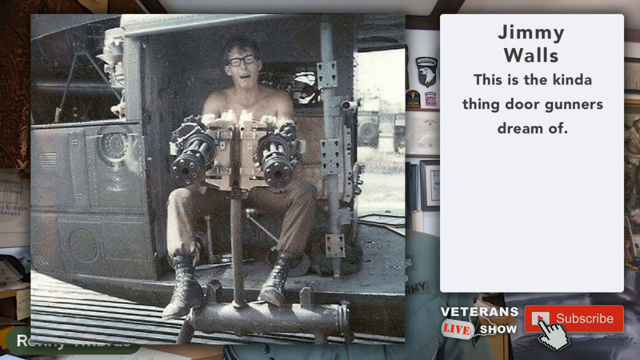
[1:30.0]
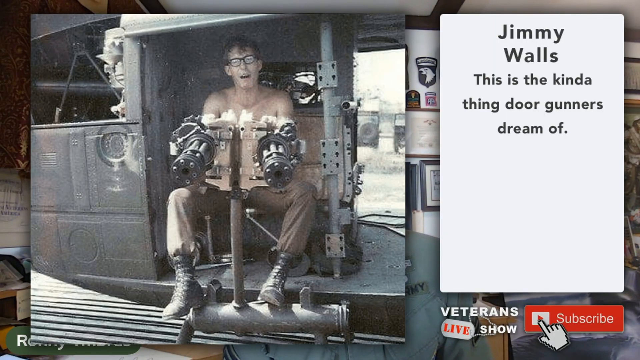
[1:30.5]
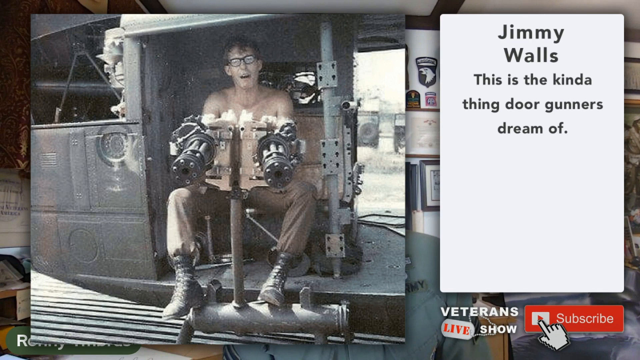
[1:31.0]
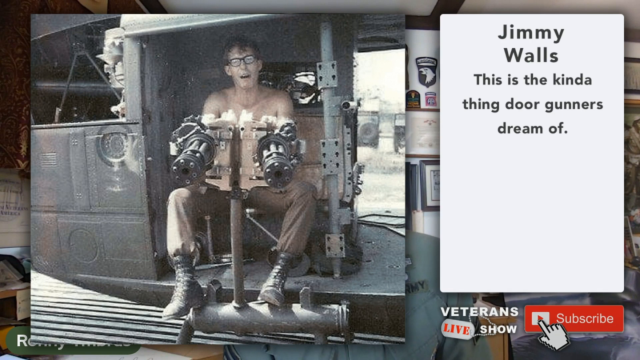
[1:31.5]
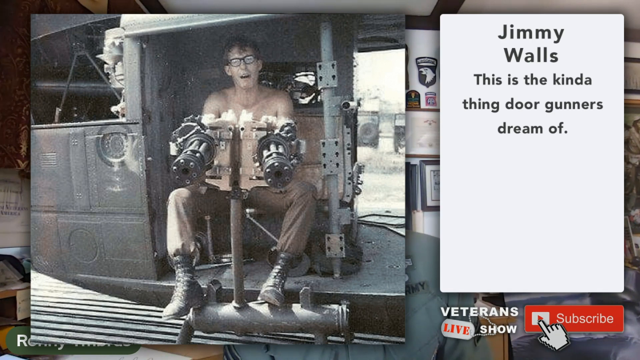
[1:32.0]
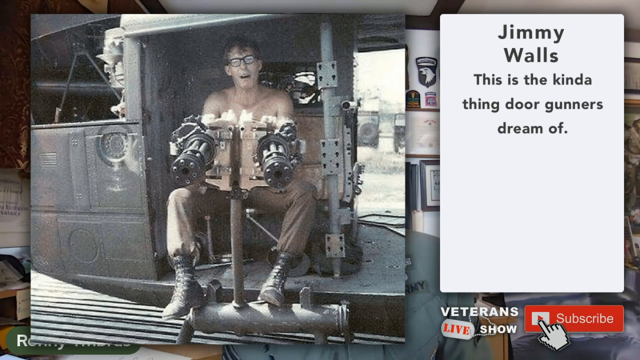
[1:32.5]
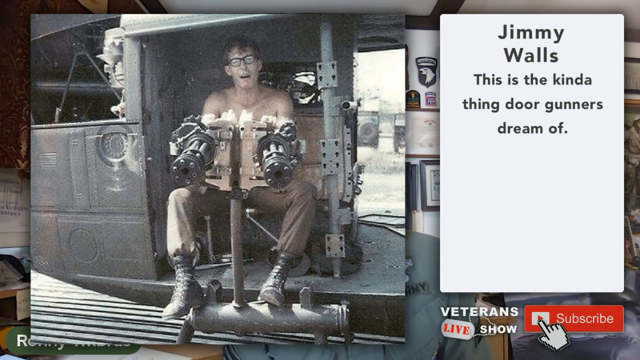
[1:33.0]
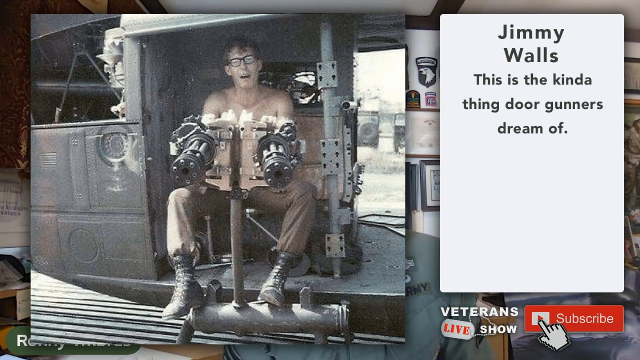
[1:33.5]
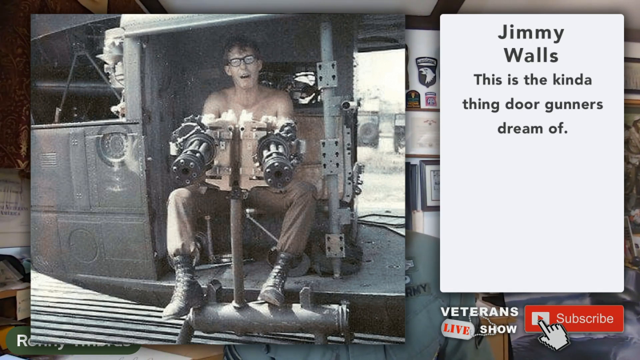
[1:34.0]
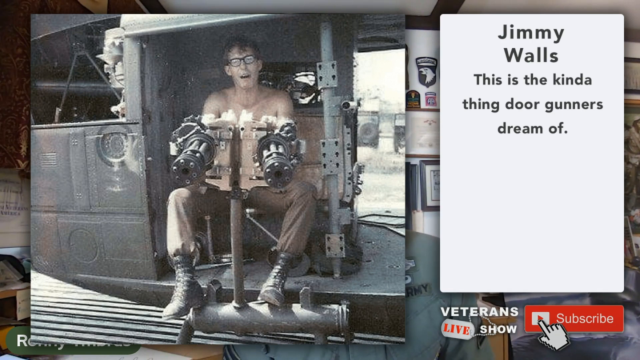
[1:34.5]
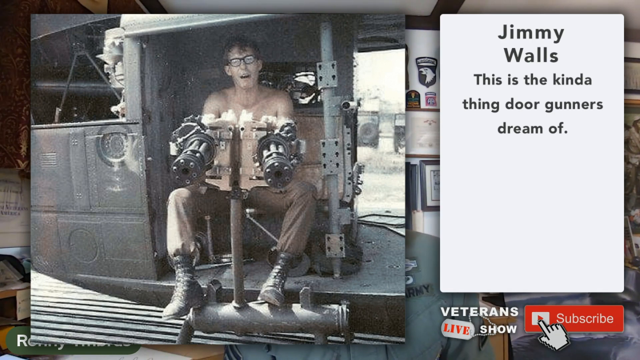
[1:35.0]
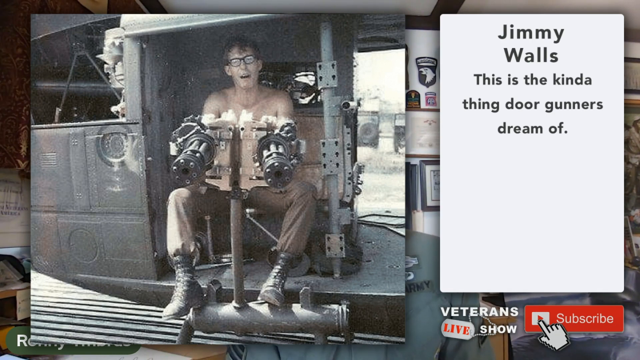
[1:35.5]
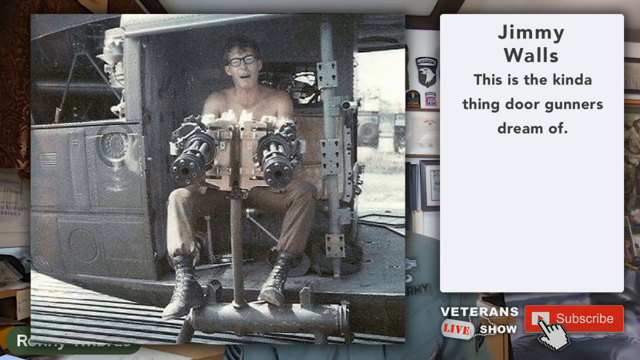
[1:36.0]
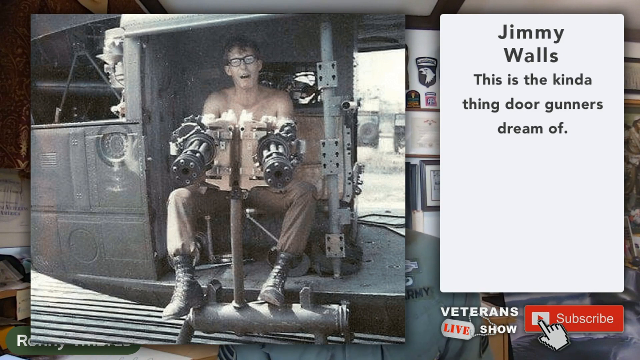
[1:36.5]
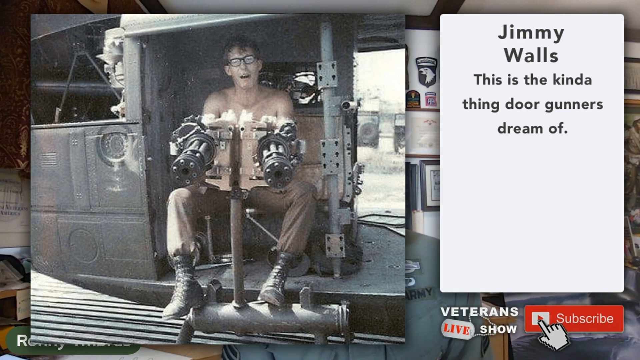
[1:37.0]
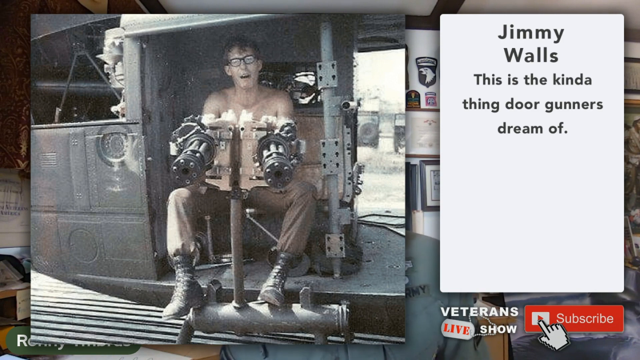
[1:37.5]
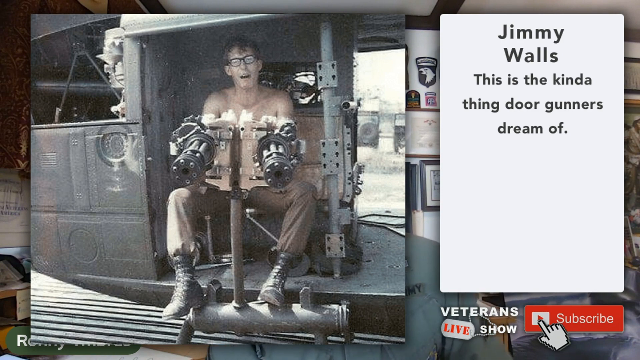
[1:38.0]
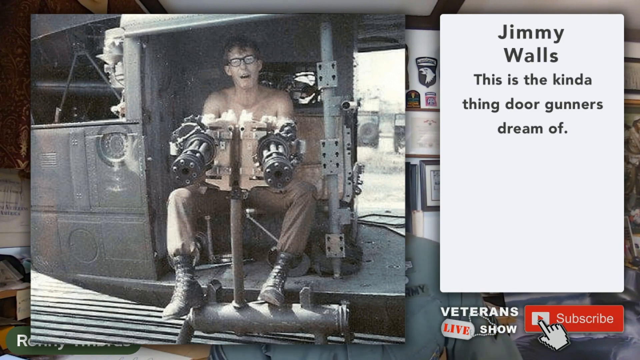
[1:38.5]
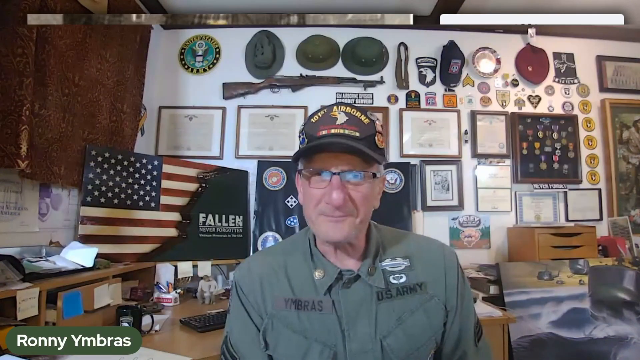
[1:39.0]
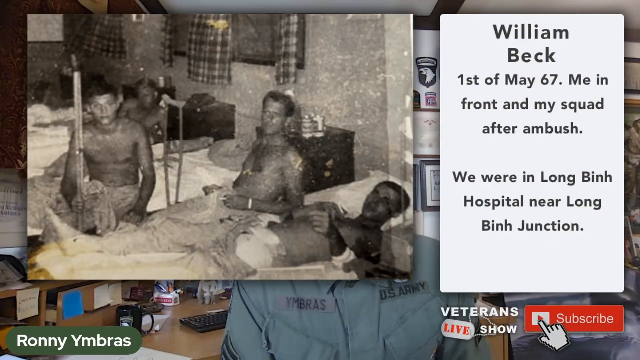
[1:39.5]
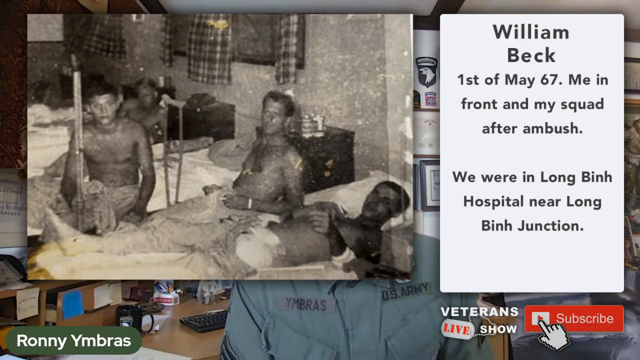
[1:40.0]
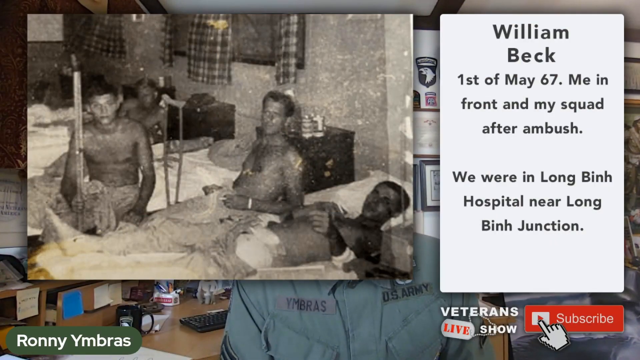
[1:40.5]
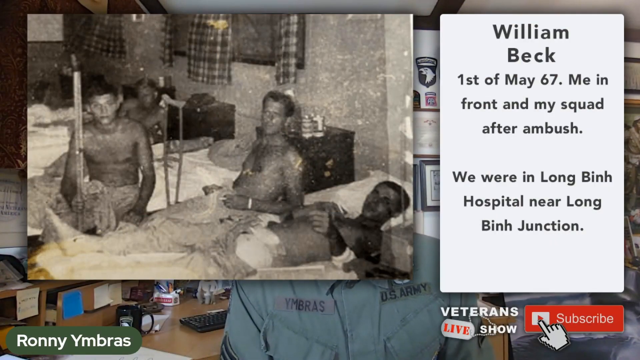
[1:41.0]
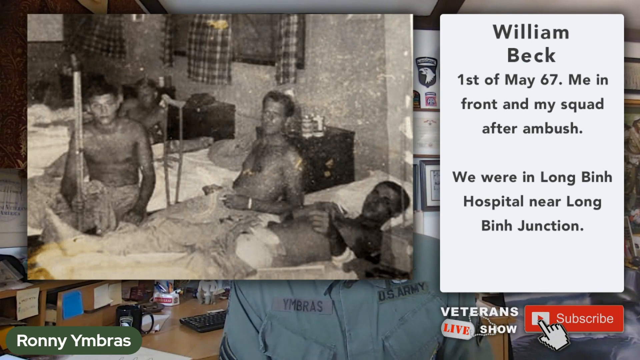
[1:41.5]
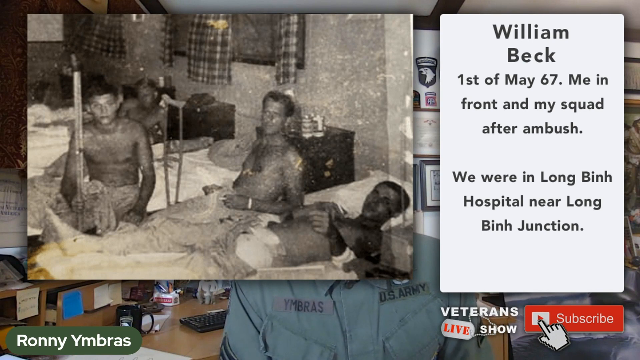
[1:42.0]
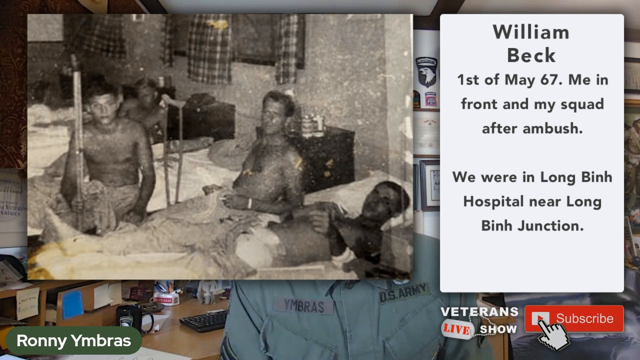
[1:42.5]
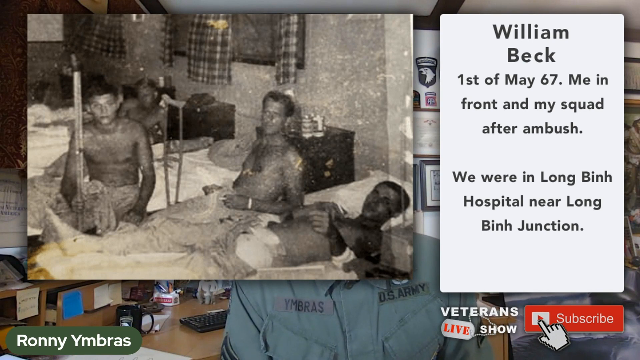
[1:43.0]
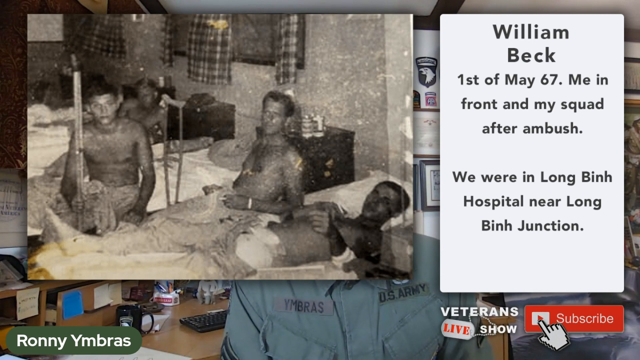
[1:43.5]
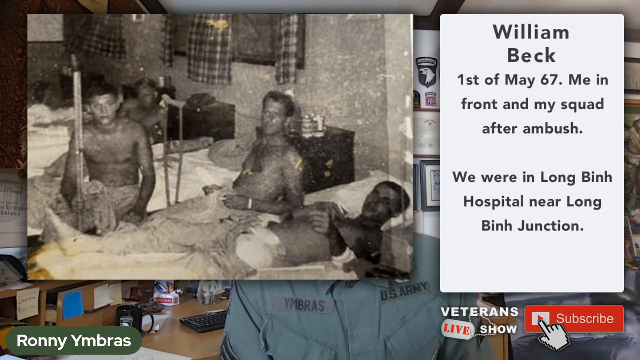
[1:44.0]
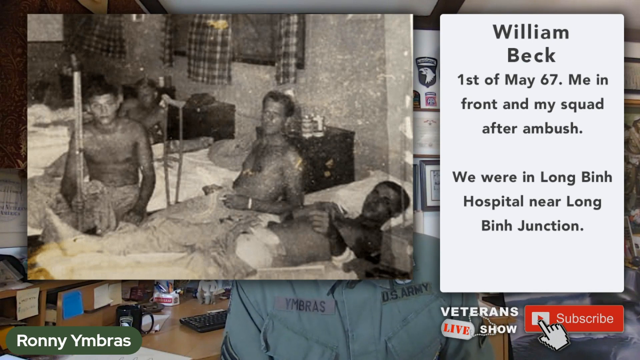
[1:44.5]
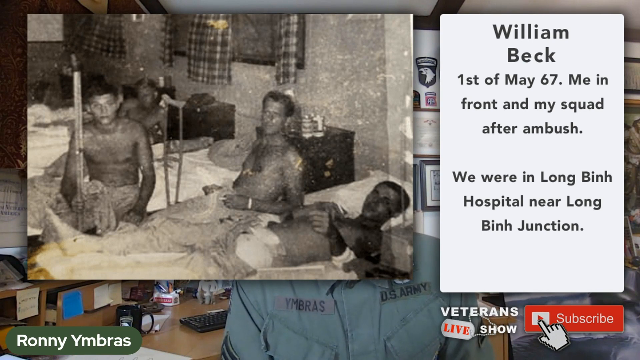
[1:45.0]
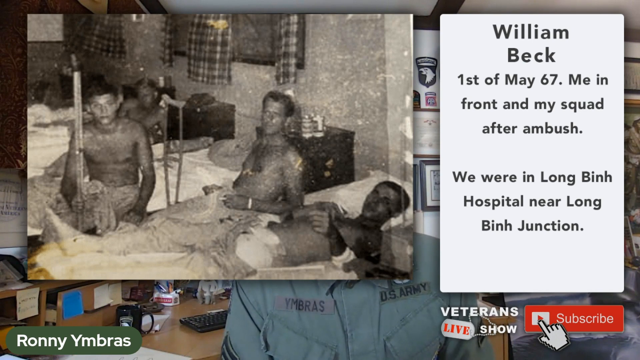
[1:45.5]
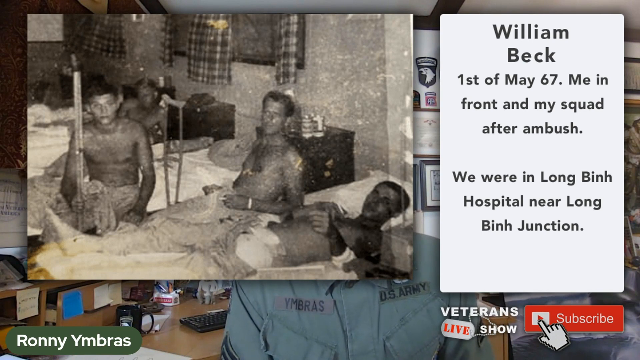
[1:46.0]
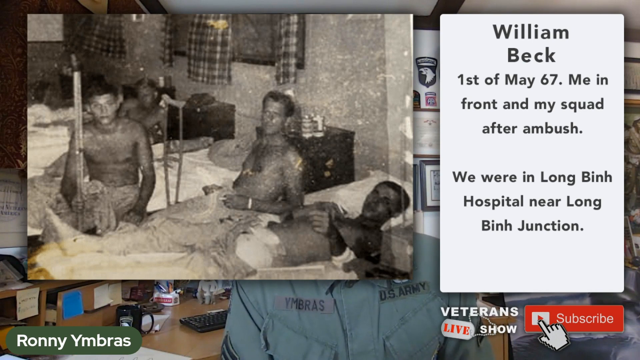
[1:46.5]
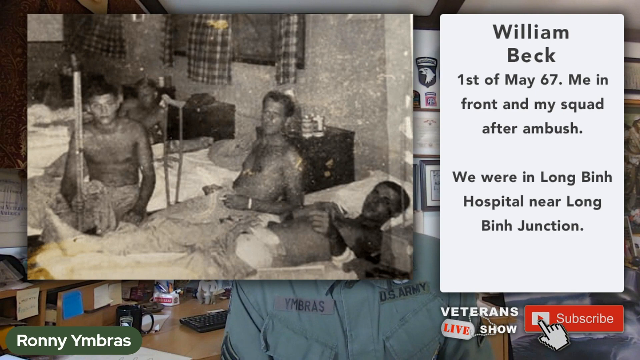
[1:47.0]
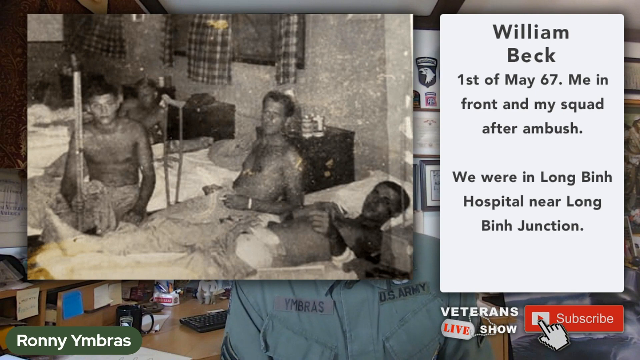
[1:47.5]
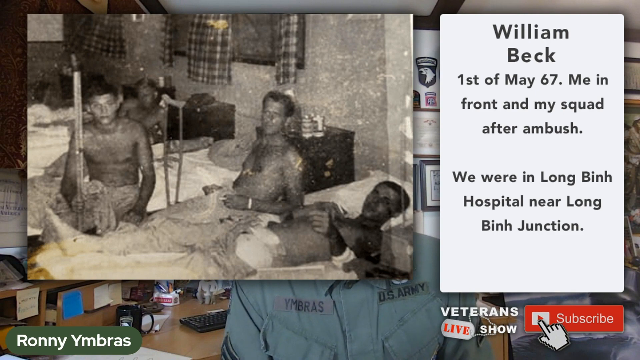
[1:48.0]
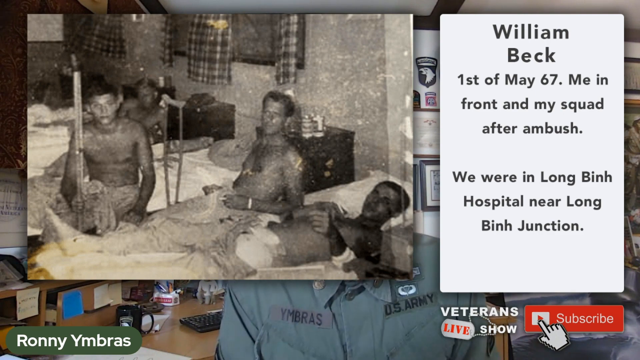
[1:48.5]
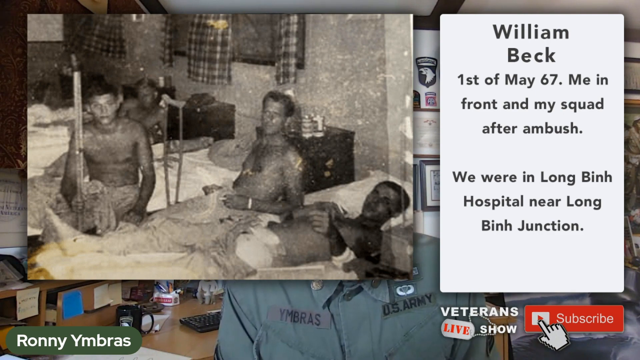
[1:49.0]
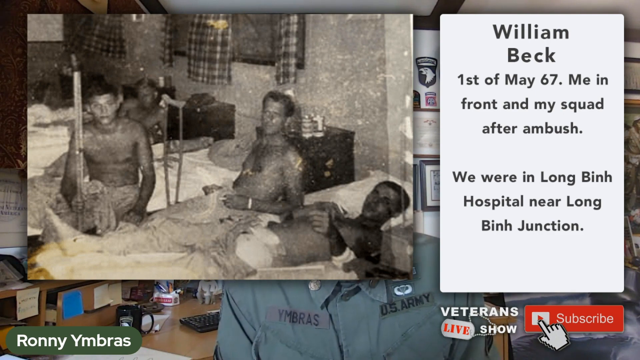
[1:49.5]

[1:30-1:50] Ronnie, the Vietnam veteran presenting the video, shows a picture of Jimmy Walls with the text "this is the kind of thing door gunners dream of." Jimmy is sitting in a seat with two giant machine guns connected by a pole in front of him, which he probably only has to move, rotate and fire. He is a young man with glasses, no shirt, military pants and shoes. He is sitting in something that could be a plane or a helicopter, in place of the door, running the machine gun; it is a still picture and he is not shooting. Ronnie is seen briefly, and then the next picture is from William Beck, with text reading "This is the 1st of May, 1967. This is William in front and my squad after the ambush," and mentioning Long Bin Hospital near Long Bin Junction. William is in front, lying down. The next man is sitting up, leaning back on his elbows, seemingly almost on the same bed. In the next bed a third person sits up looking at the camera, and there is a crutch. Behind him, in another bed, a fourth person leans to the side.